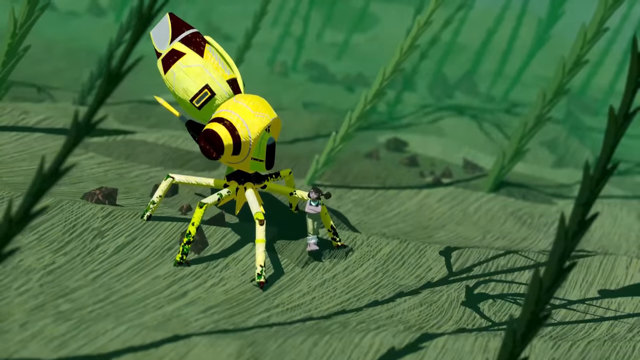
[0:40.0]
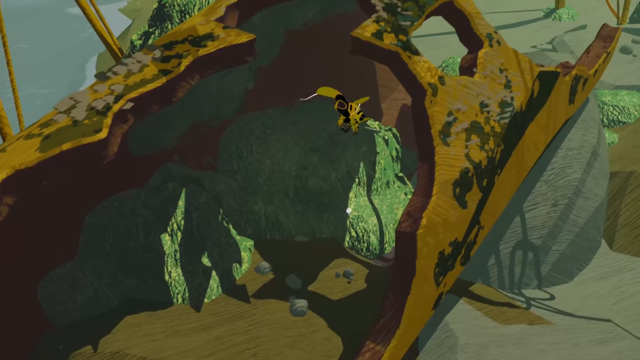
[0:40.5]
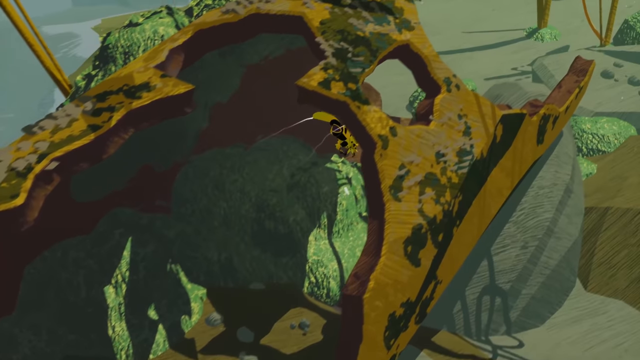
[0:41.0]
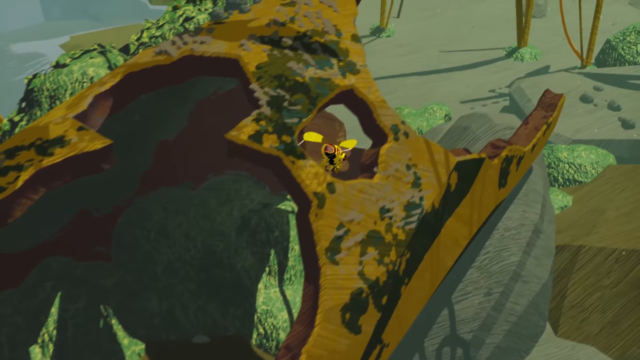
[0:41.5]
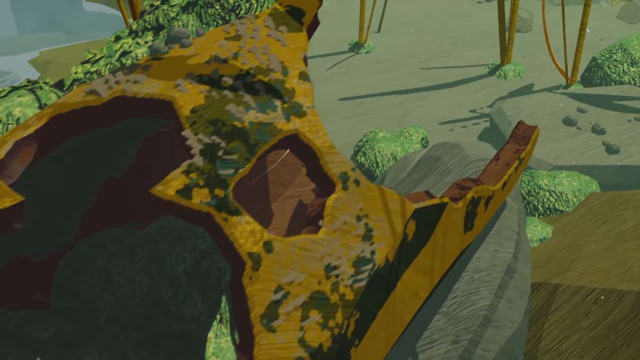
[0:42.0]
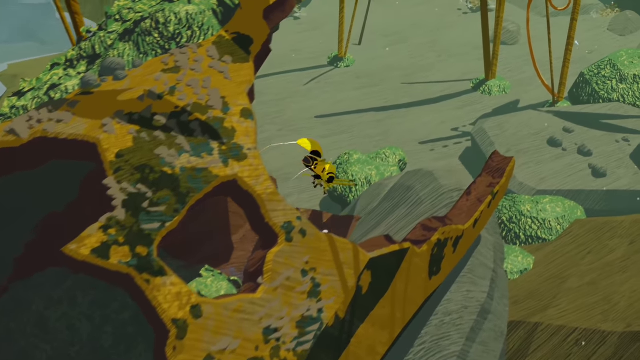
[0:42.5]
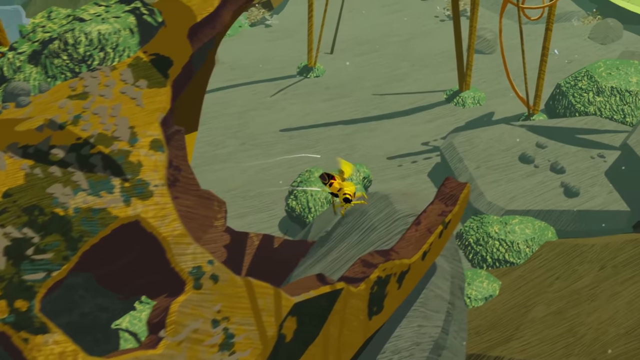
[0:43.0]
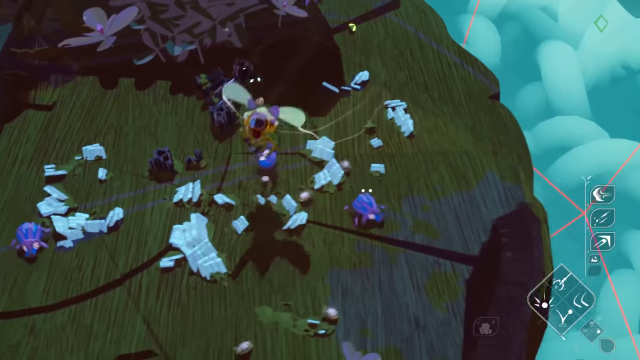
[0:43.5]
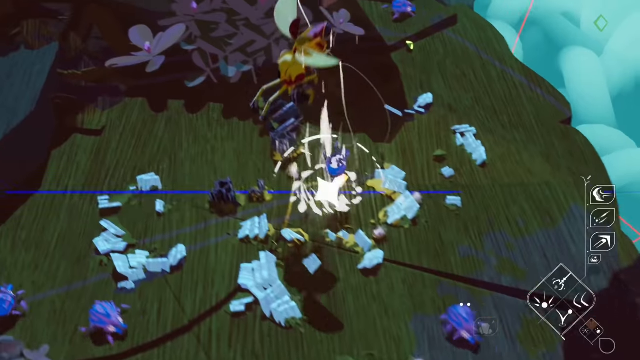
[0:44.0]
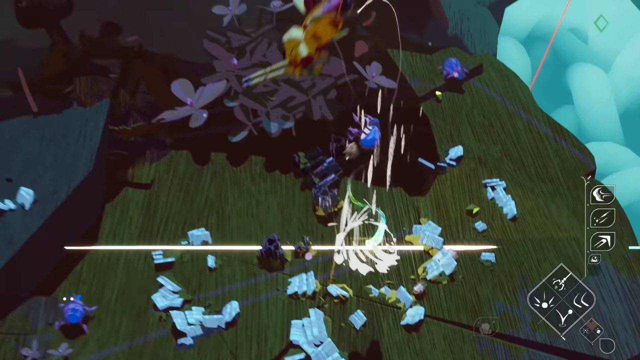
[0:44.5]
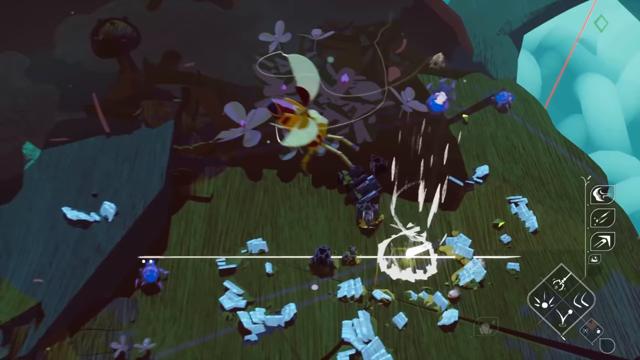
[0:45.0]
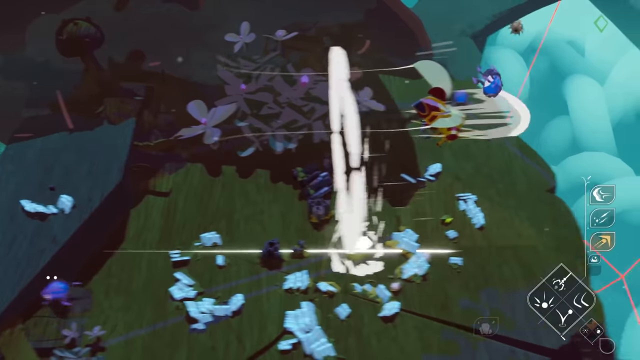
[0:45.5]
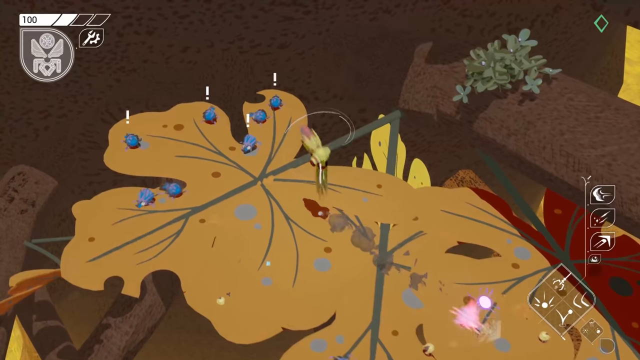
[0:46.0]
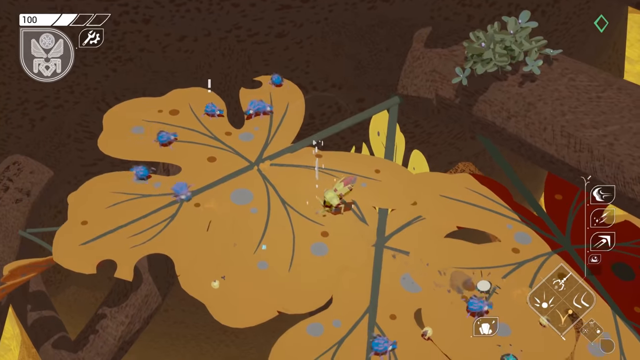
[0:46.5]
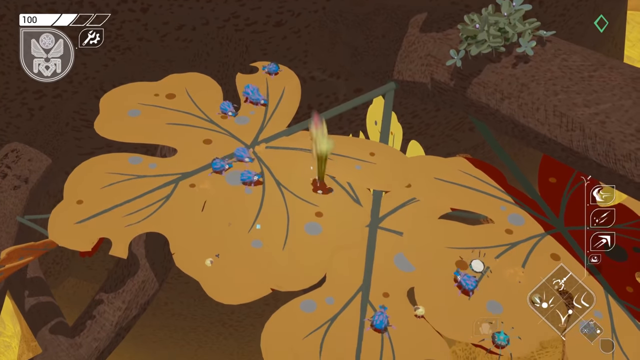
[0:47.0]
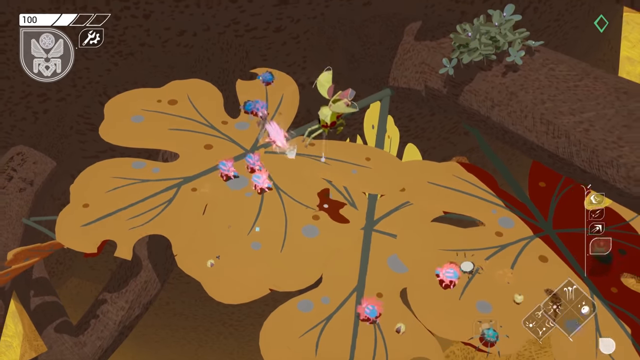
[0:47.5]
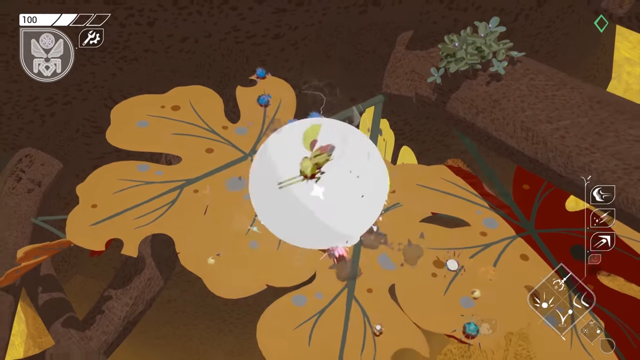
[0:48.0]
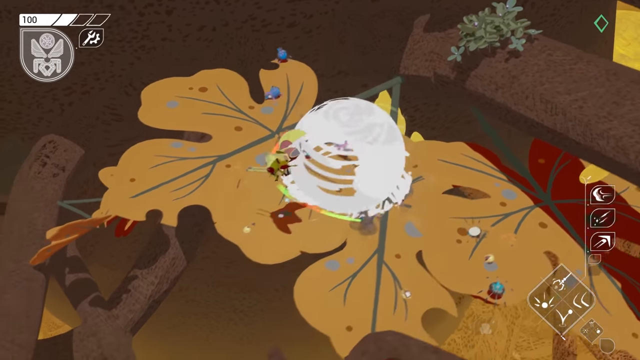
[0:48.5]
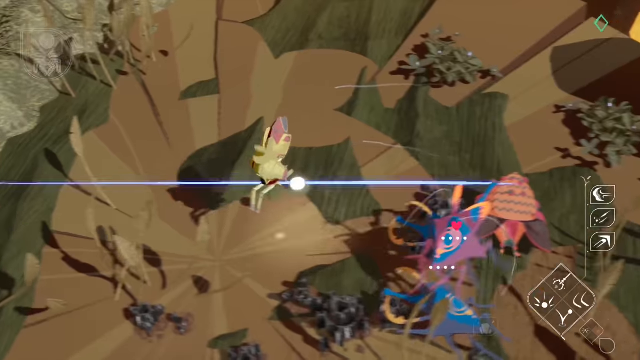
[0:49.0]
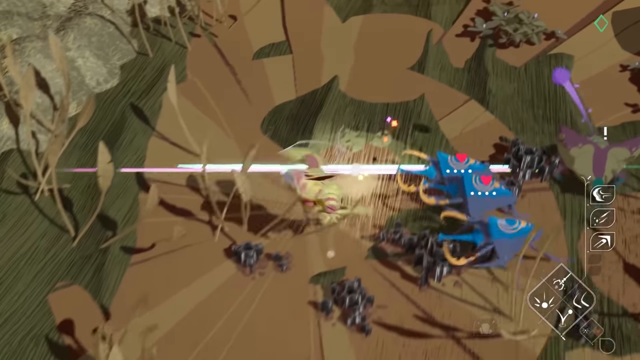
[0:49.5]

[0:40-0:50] More of the tiny fictional world appears. A woman stands next to a flying vehicle that looks like a tiny spaceship but also looks like a bee. This still seems to be a cutscene rather than someone playing the game. The very tiny bee-like vehicle flies around inside hollow logs, interacting with other small insects, shooting them and battling them.